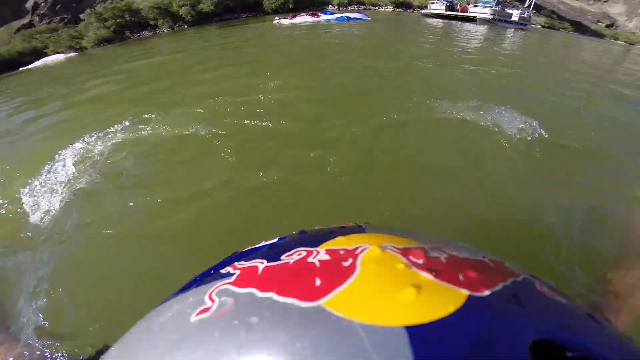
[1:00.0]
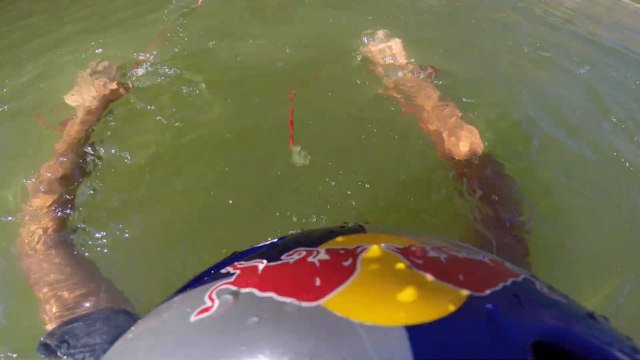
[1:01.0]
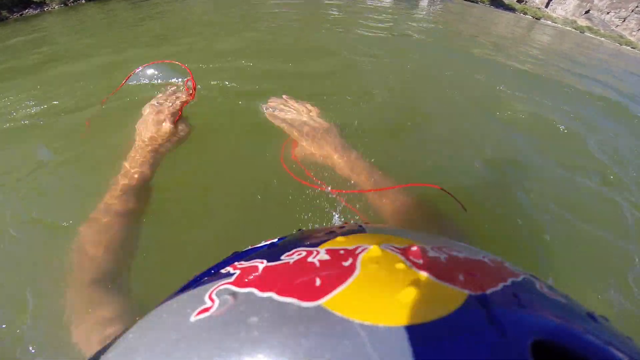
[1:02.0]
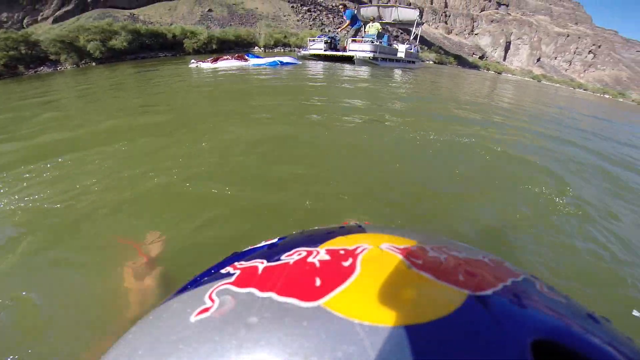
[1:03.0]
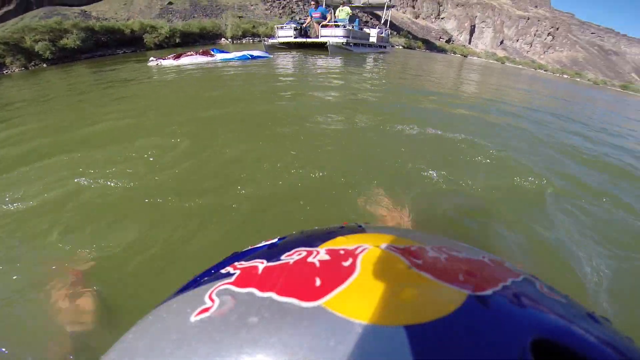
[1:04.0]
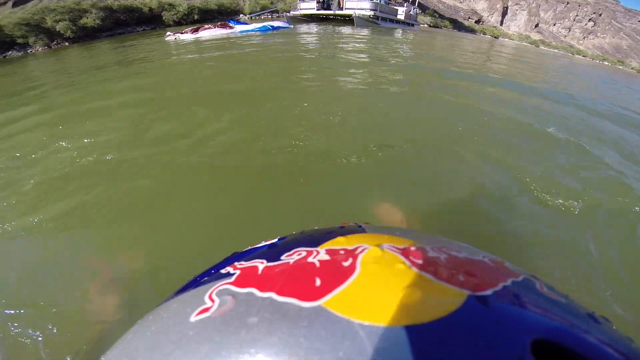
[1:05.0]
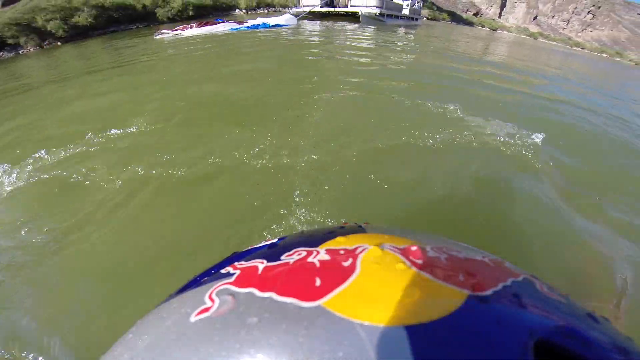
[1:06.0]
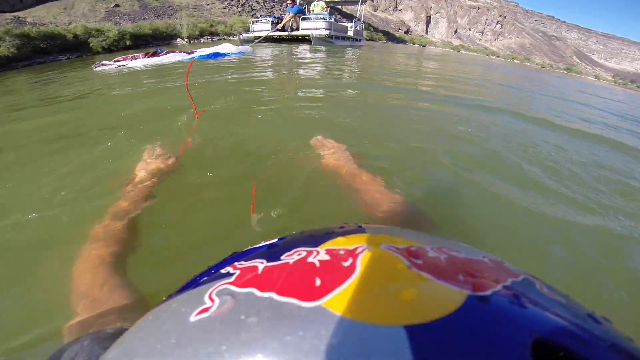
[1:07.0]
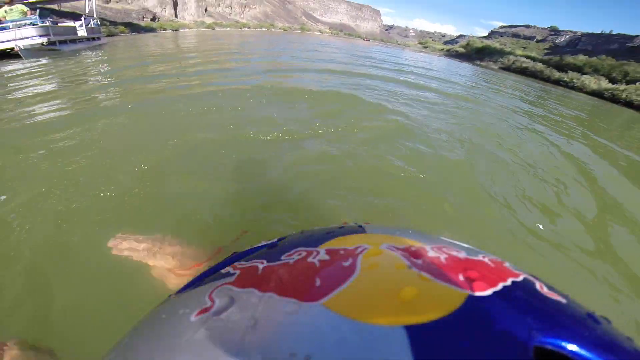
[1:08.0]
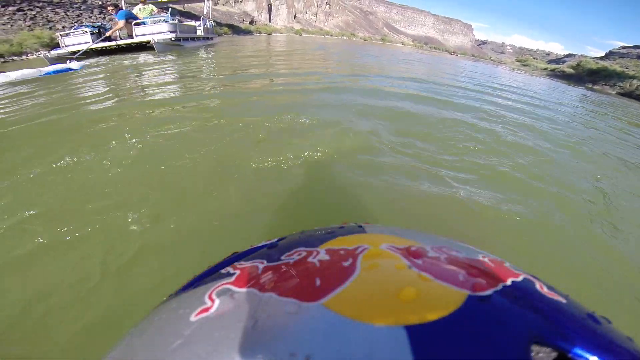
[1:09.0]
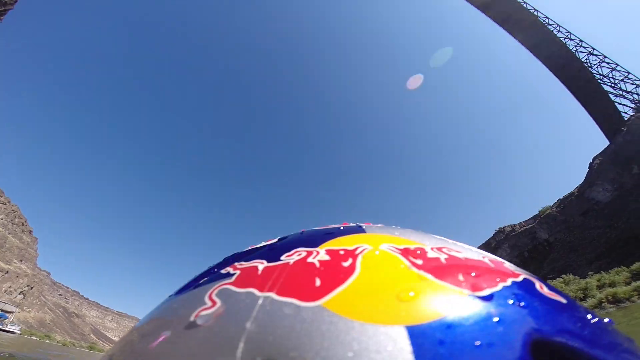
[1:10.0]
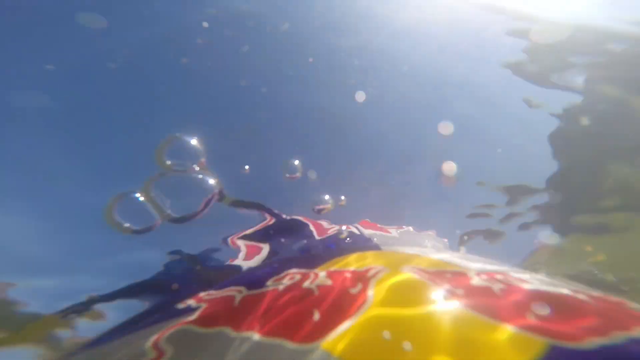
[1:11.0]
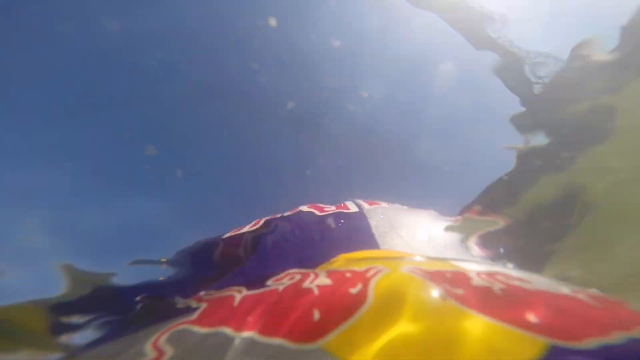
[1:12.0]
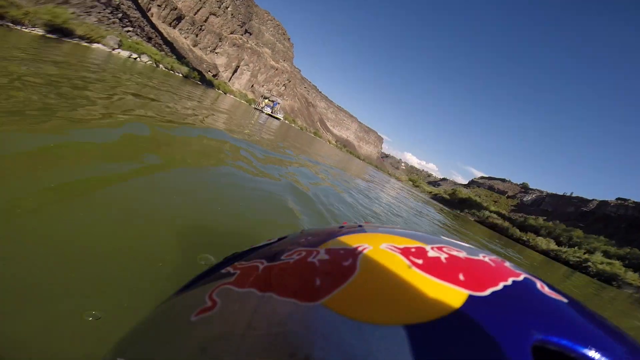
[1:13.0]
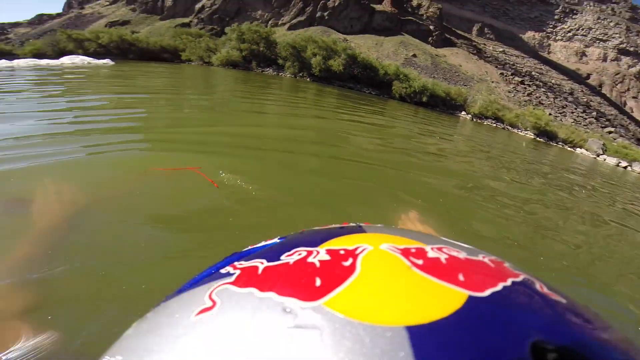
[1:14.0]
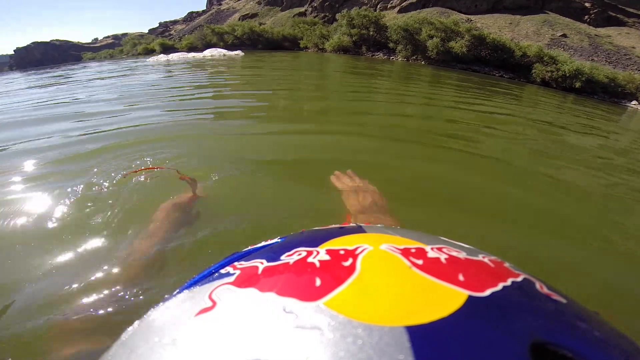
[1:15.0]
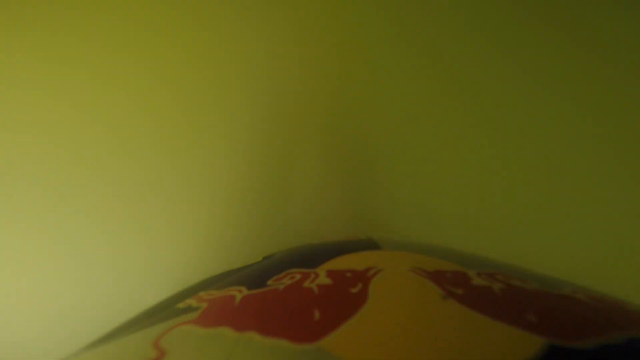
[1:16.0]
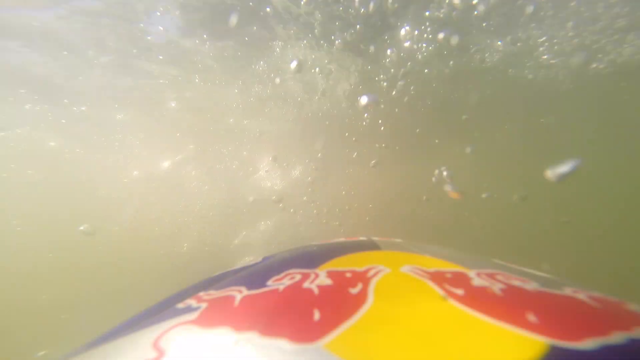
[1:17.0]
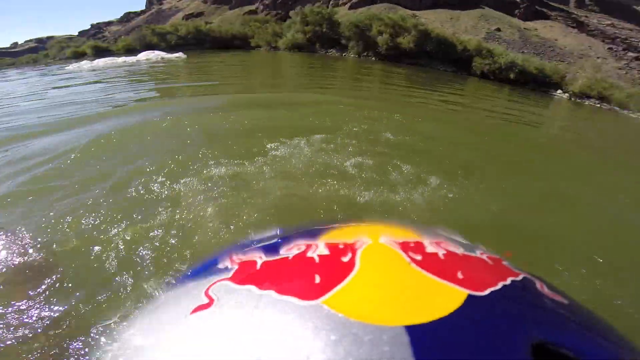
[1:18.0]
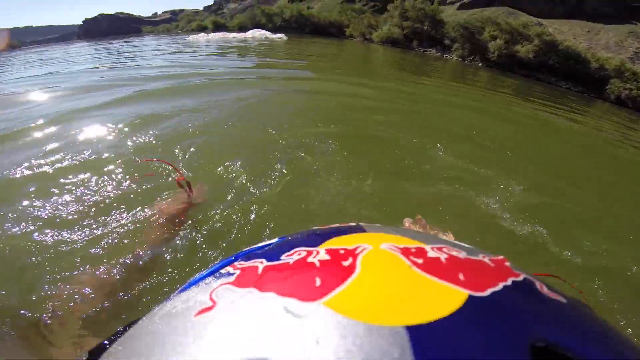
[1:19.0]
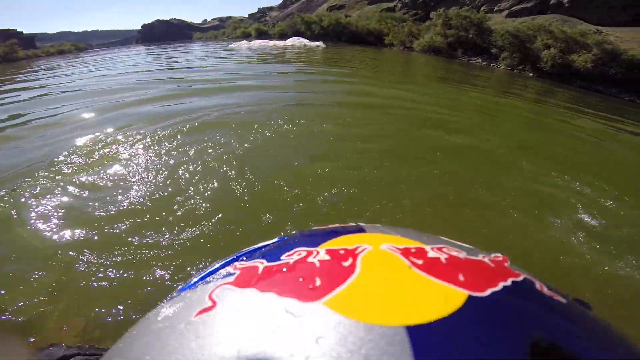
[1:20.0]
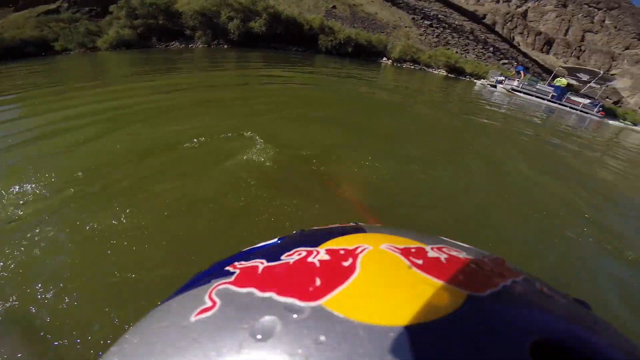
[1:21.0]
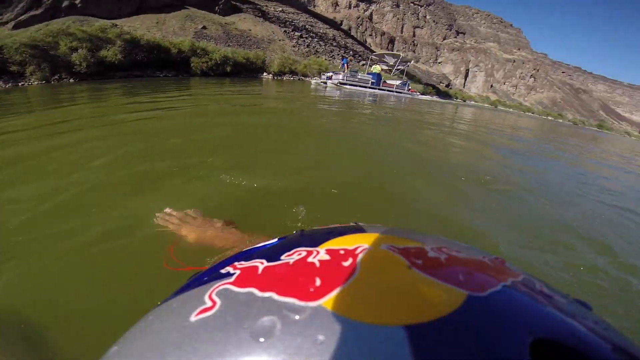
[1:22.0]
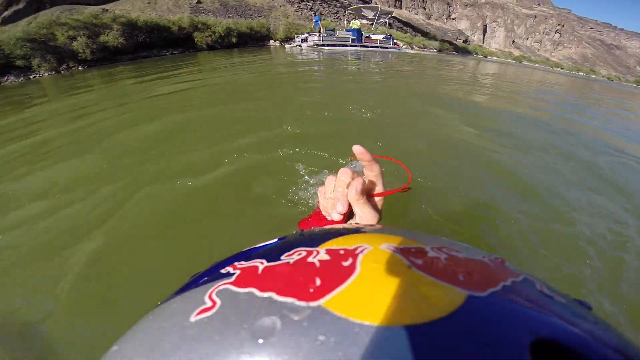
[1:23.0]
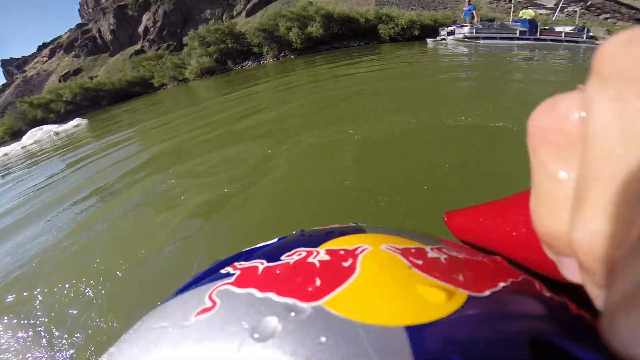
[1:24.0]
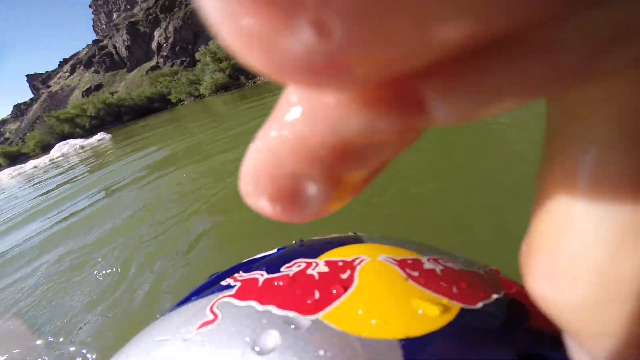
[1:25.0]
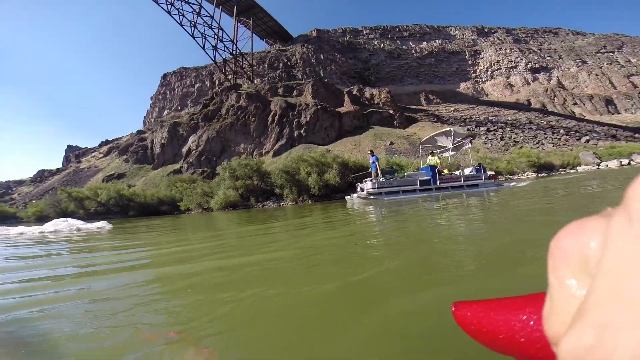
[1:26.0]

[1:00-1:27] A camera on the person's helmet partially shows the top of the helmet and part of the Red Bull logo: two red bulls facing each other with a yellow circle in the middle. The person's hands are underwater, swinging back and forth as they tread water, moving towards what looks like a boat. A person on the boat has some type of rod with which they grab the parachute. The person in the water does not seem concerned with the boat or in a hurry, looking around, looking up a bit at the bridge and putting their head under the water. They tread water with a red ribbon in their right hand.